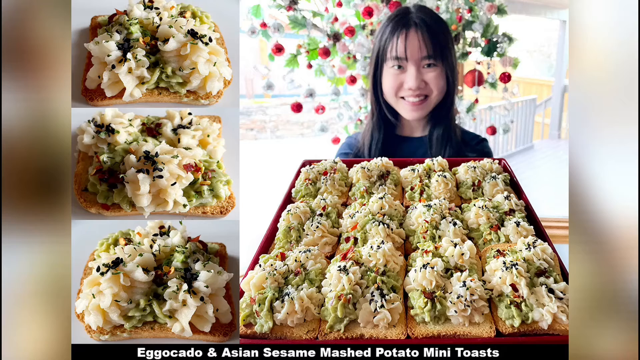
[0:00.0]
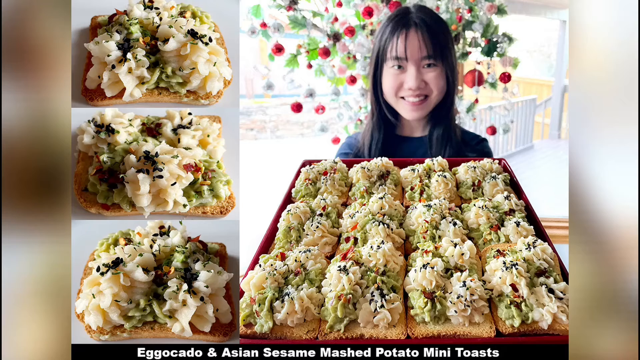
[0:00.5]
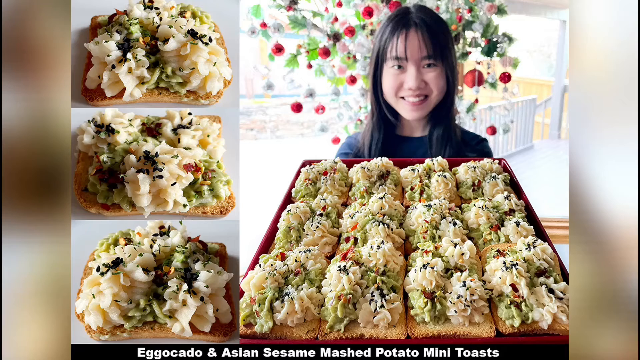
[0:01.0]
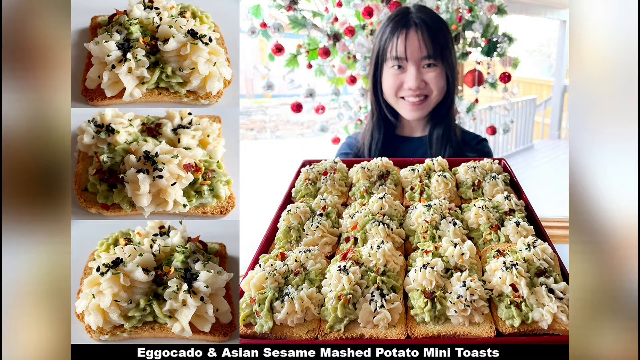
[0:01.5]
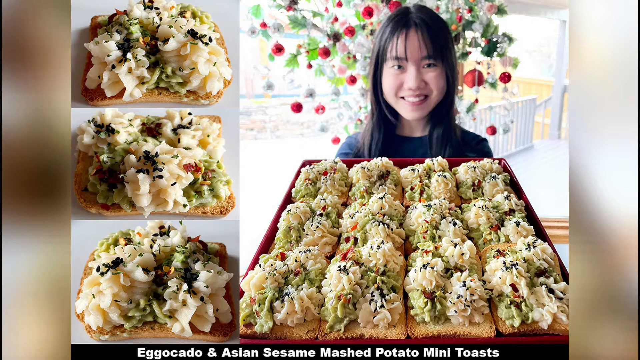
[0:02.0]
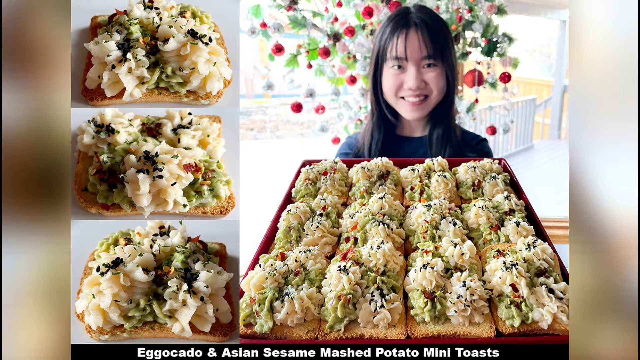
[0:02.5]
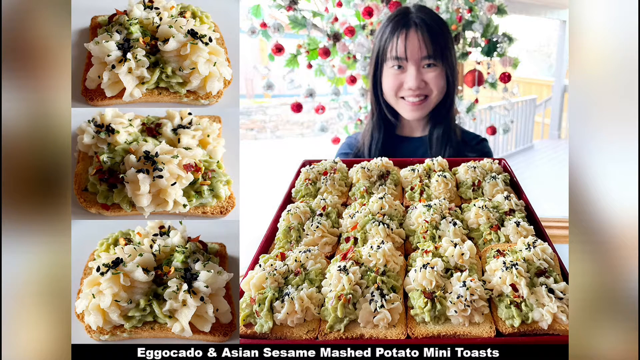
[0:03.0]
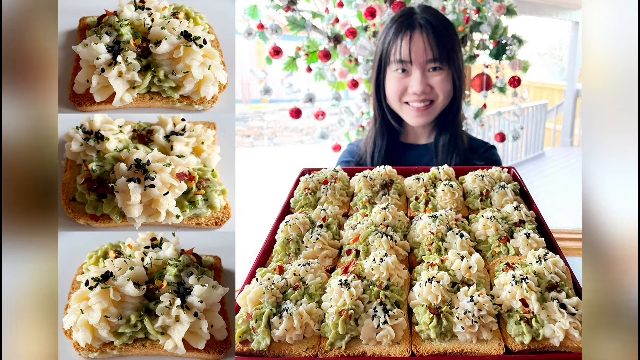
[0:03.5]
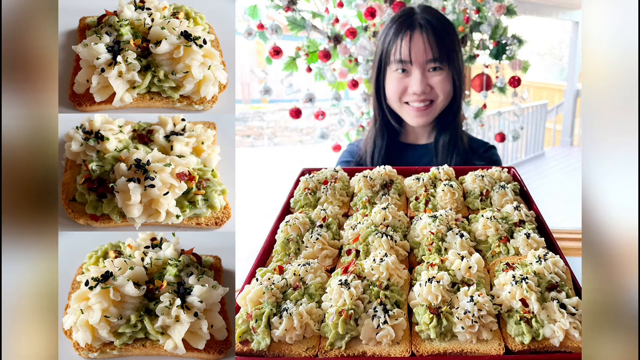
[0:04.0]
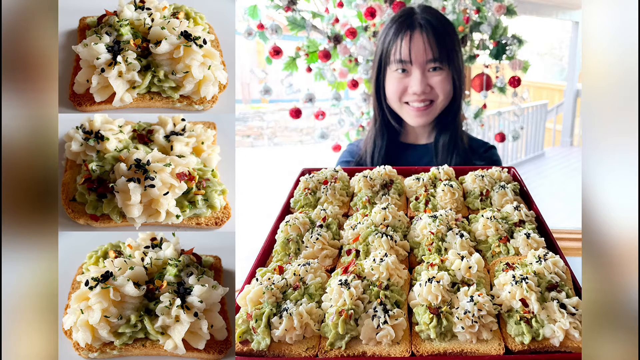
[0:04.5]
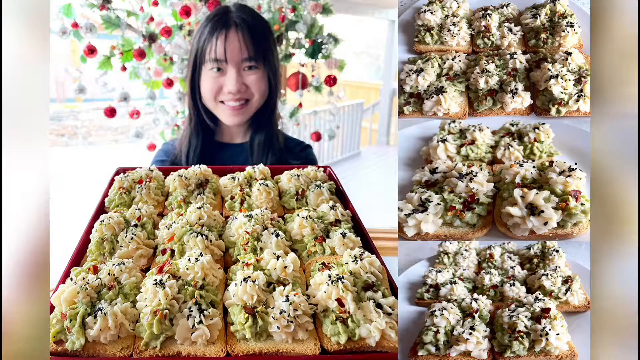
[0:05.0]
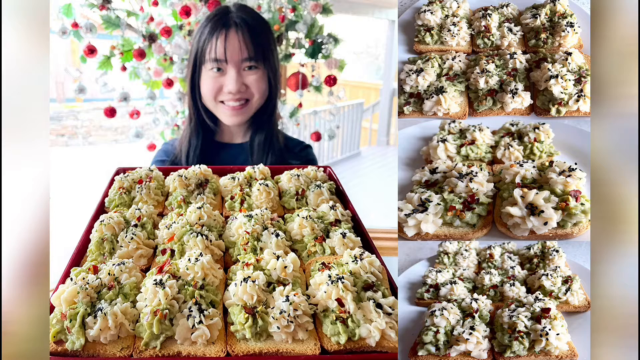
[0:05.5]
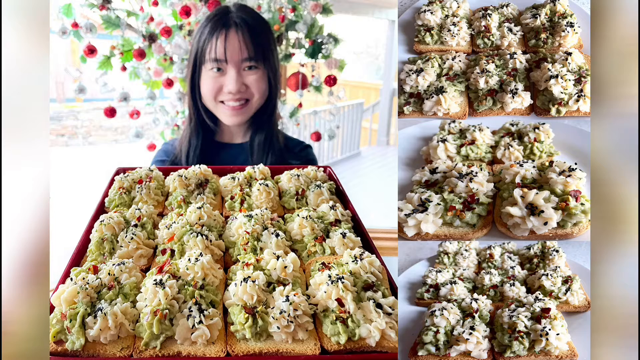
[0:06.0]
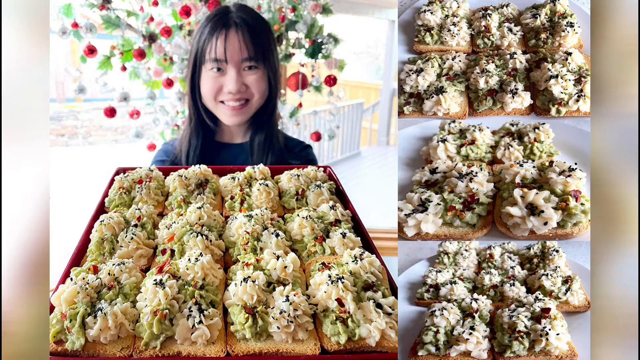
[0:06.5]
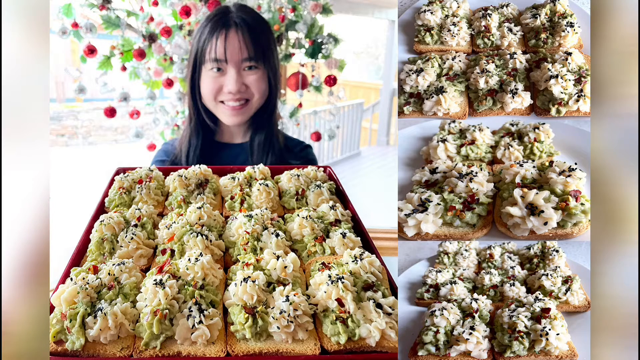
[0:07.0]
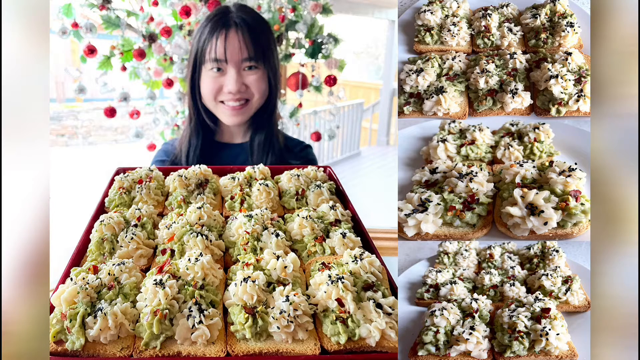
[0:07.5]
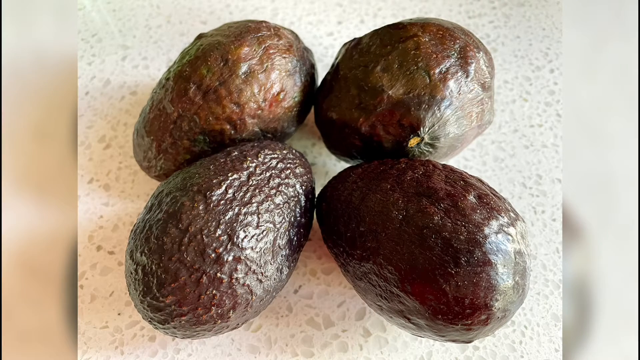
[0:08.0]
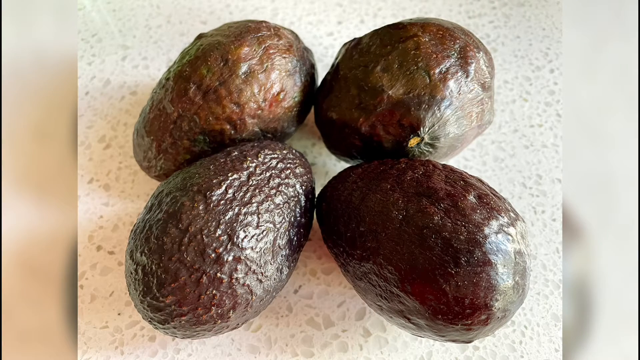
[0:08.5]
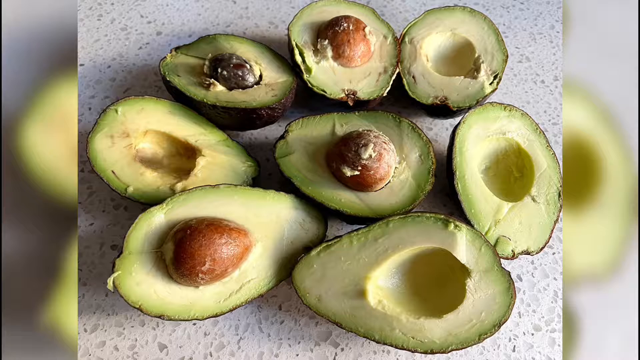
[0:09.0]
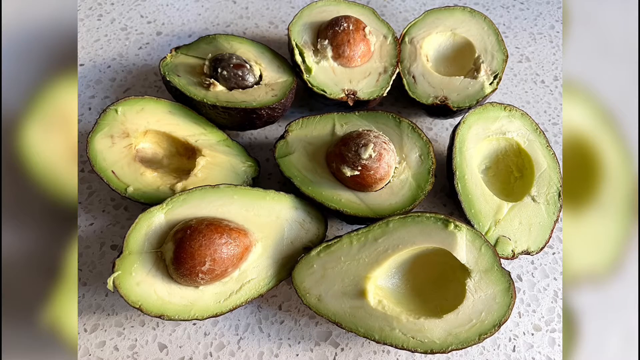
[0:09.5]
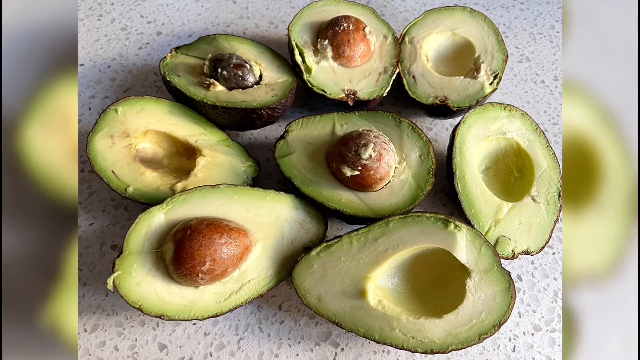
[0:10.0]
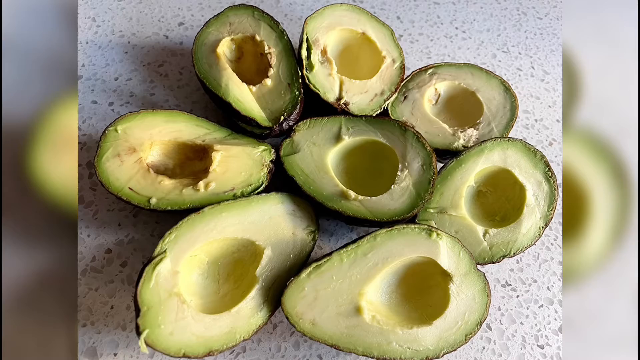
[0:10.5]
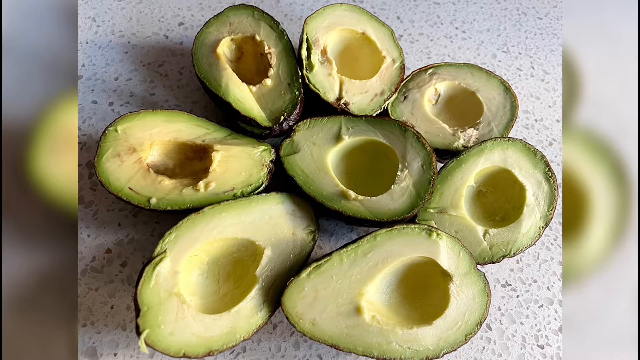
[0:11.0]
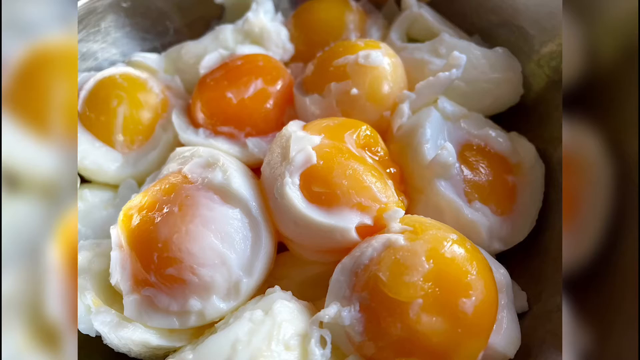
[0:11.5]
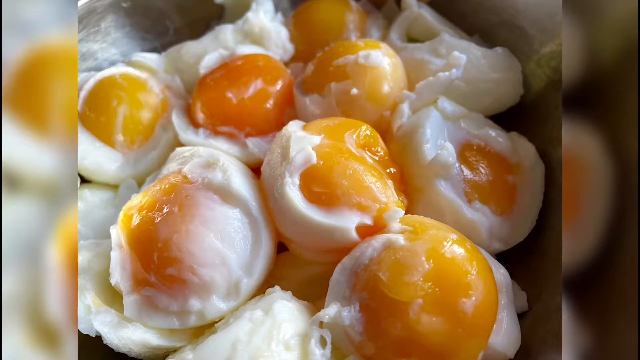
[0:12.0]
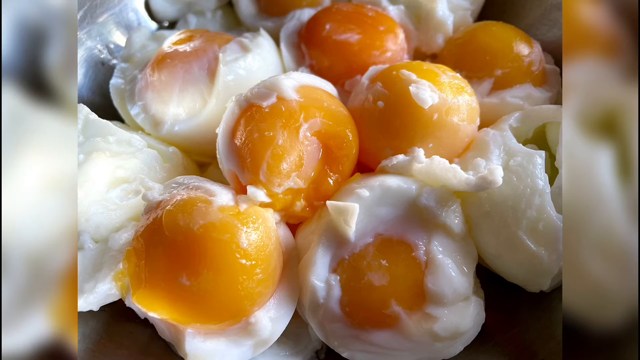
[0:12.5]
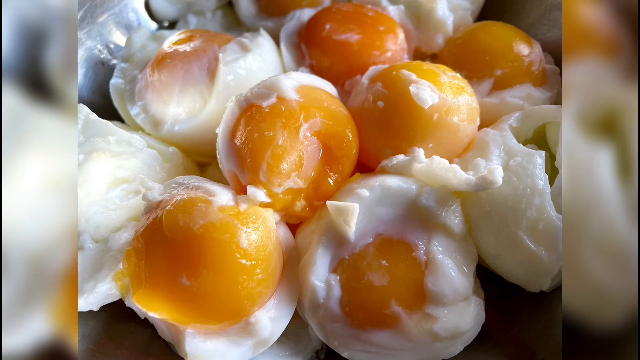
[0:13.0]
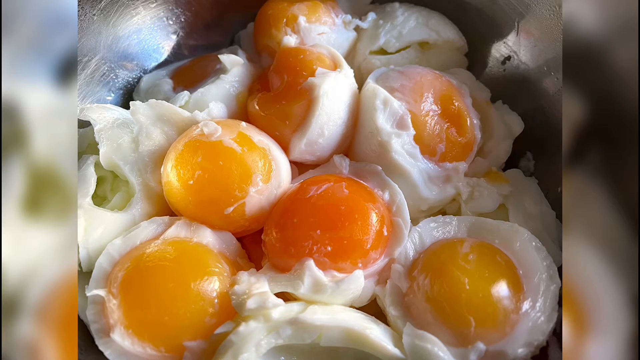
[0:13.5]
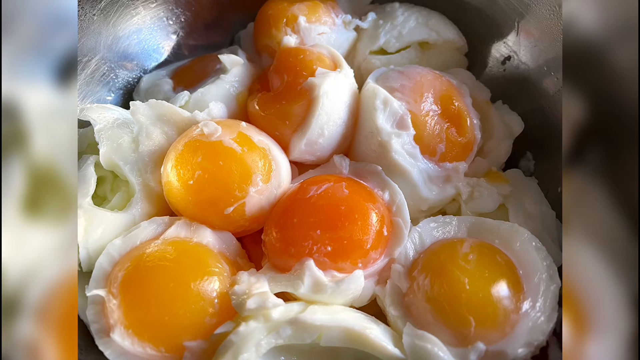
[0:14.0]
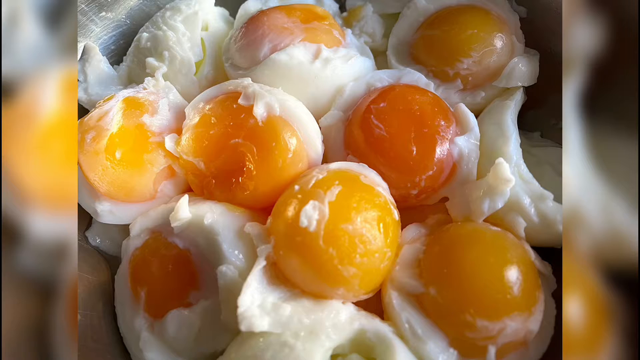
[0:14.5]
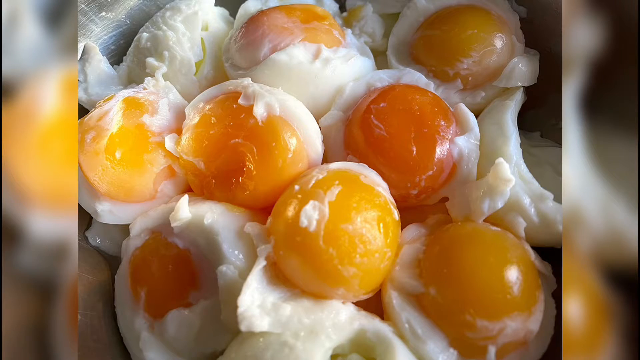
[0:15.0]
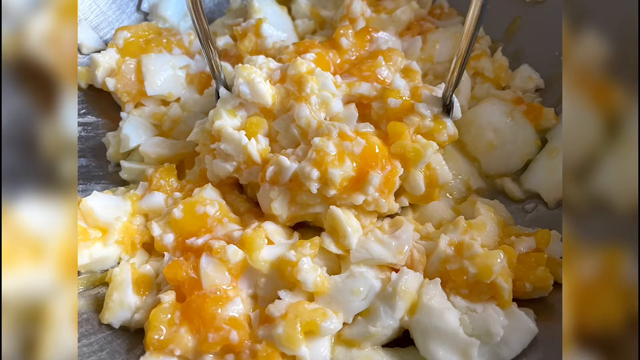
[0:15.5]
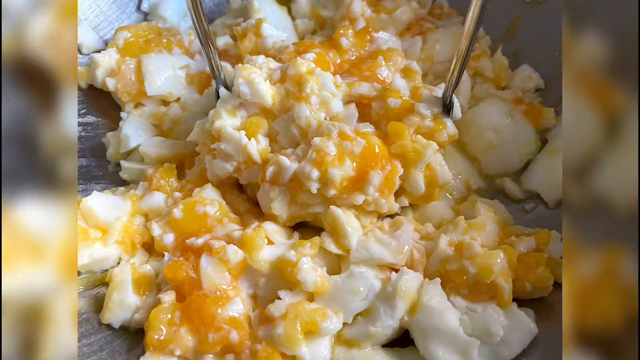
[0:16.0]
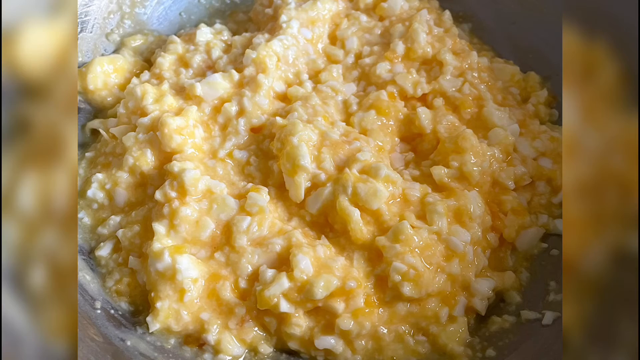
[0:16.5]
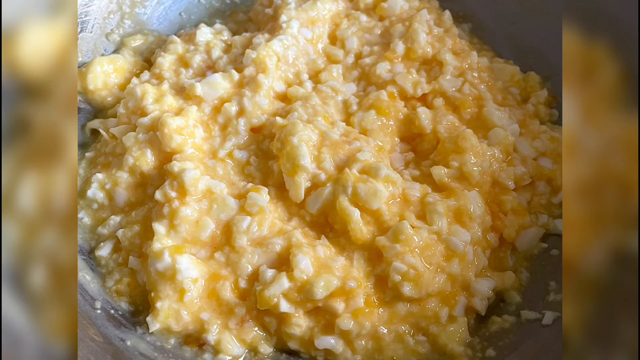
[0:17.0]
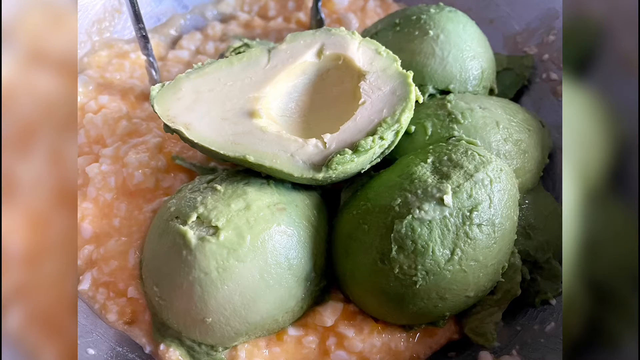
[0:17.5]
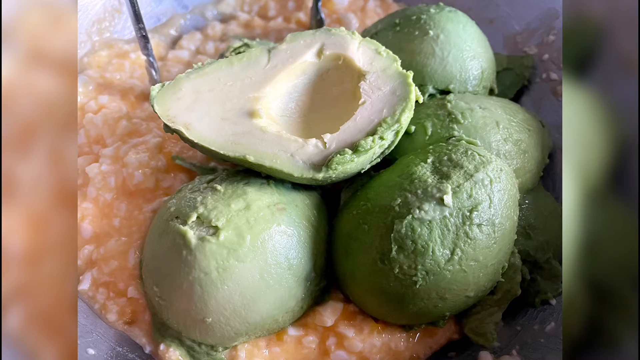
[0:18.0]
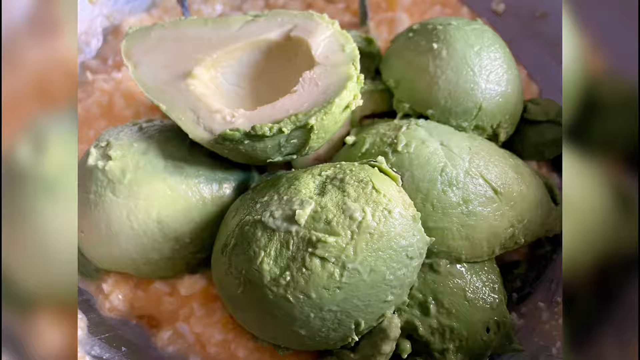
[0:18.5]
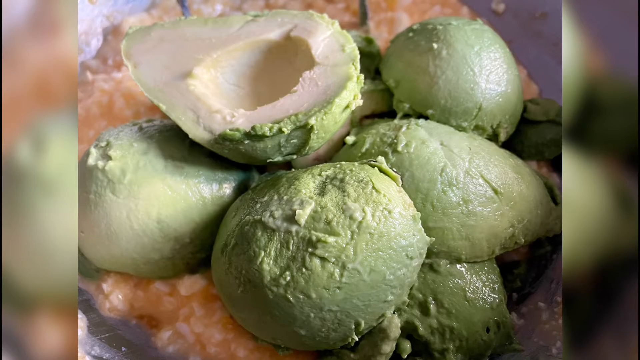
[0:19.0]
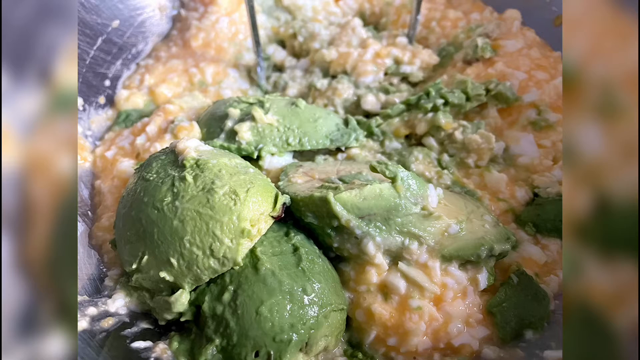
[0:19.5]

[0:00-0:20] Three images of food are arranged vertically, one on top of the other, on the left side of the frame, while the right side shows a picture of a woman holding up a red tray with 12 pieces of food on it. The woman is smiling and wearing a black shirt, and a window can be seen in her picture. At the bottom of the frame the text reads "egg-ocado Asian sesame smashed potato mini toast." The layout then changes so that the three images of food are arranged vertically on the right side and the image of the young woman holding a tray of egg-ocados is on the left. Next comes an image of four potatoes, followed by an image of eight avocados, four with the pits taken out and four with the pits still intact, and then another angle of the avocados. An image follows of eggs in a metallic bowl covered with a white frosting or sauce, with nine pieces of egg visible. Another angle of the eggs with the white frosting or sauce is shown, then another angle in the next image. Two images then show the eggs being blended together with the white sauce or frosting. Next is an image of five avocados: the top avocado is cut in half and the others are placed facing downward. The avocados are then shown at another angle.